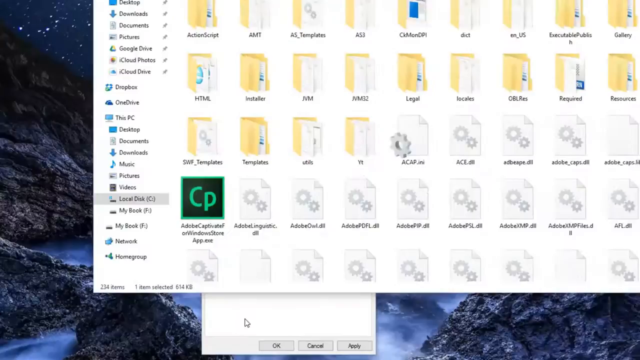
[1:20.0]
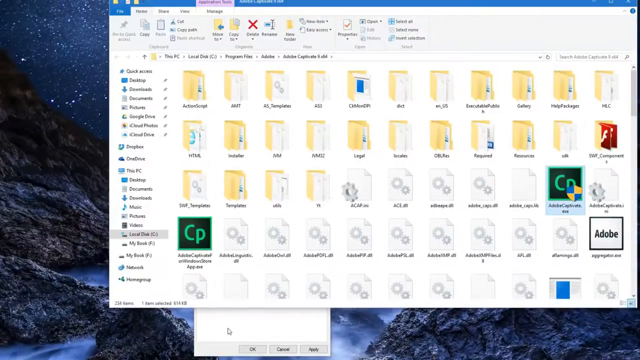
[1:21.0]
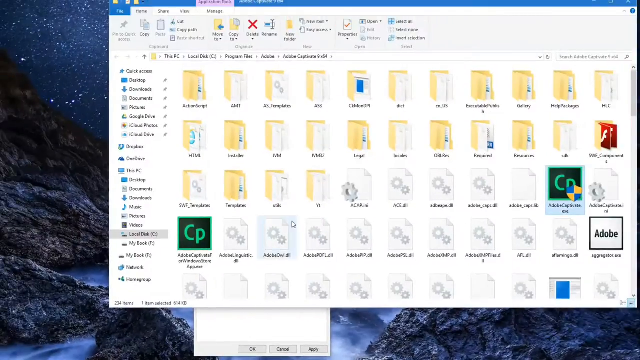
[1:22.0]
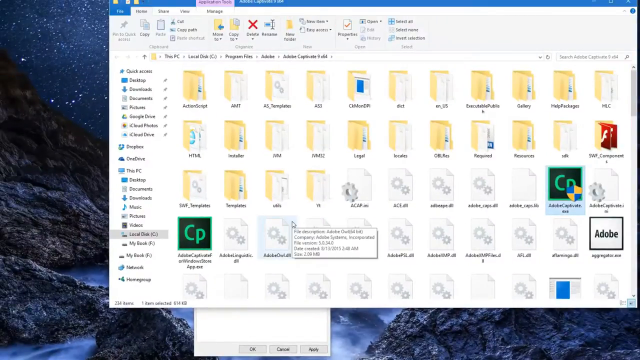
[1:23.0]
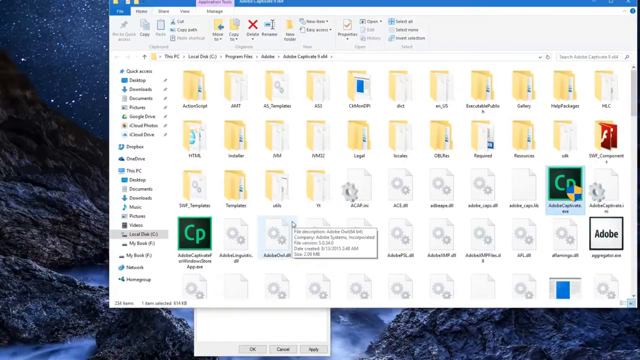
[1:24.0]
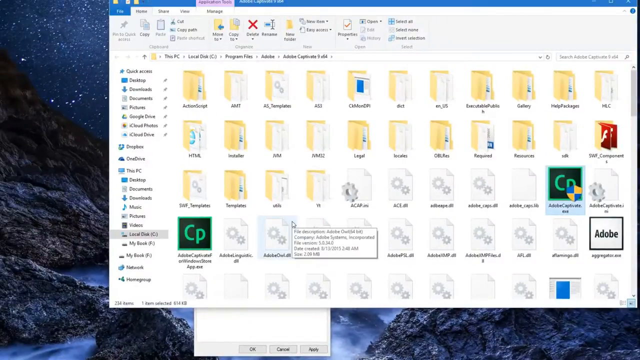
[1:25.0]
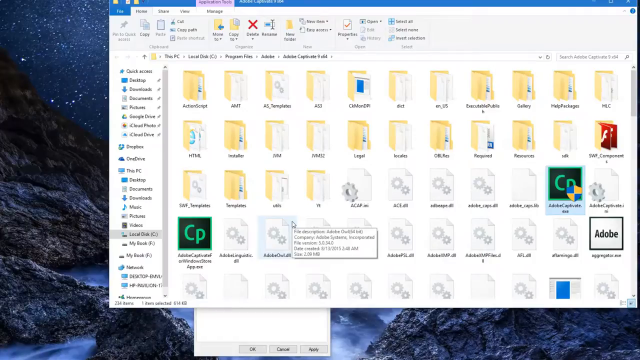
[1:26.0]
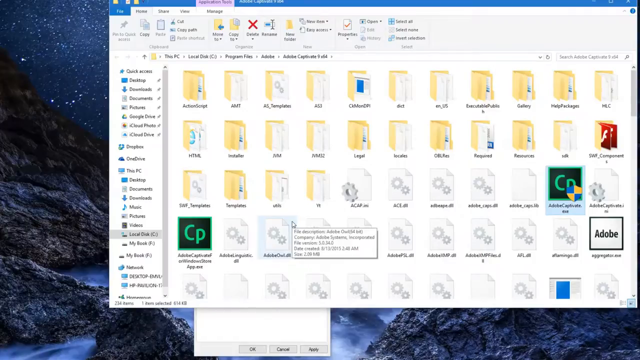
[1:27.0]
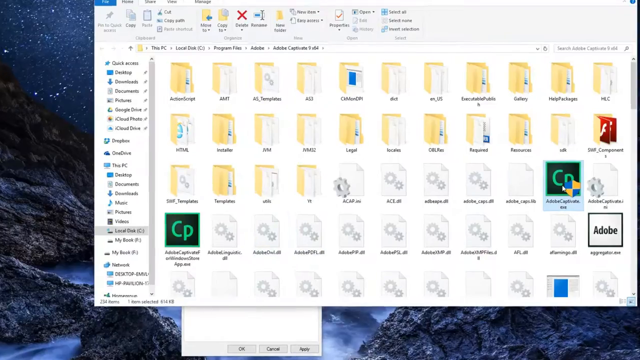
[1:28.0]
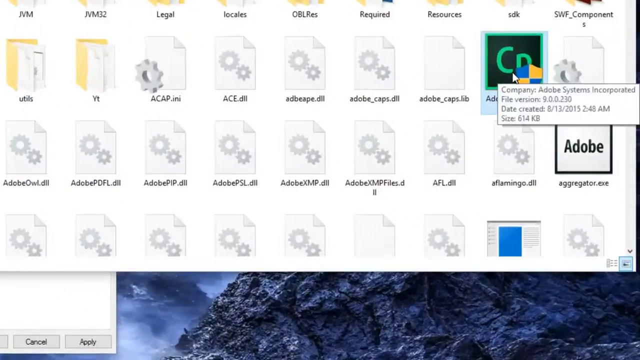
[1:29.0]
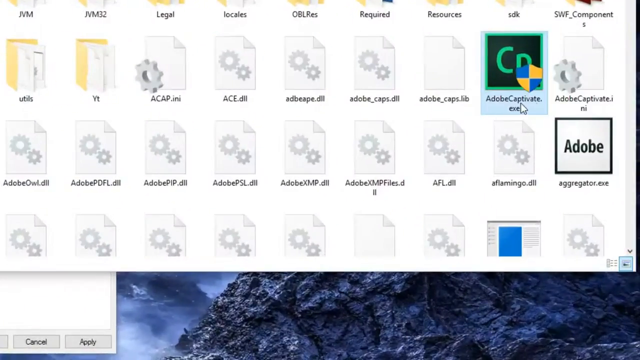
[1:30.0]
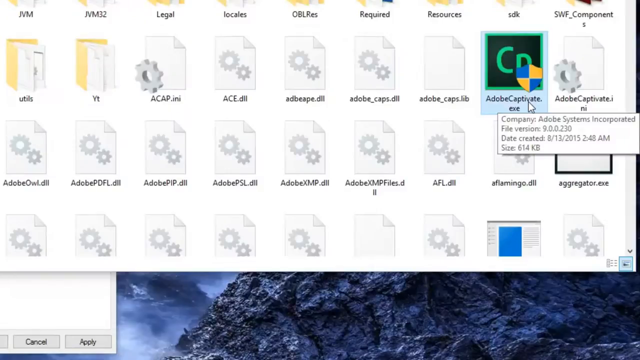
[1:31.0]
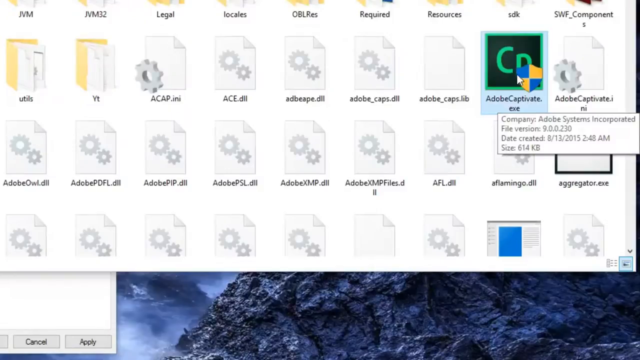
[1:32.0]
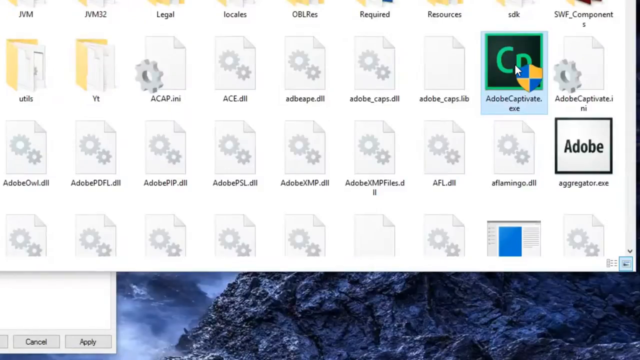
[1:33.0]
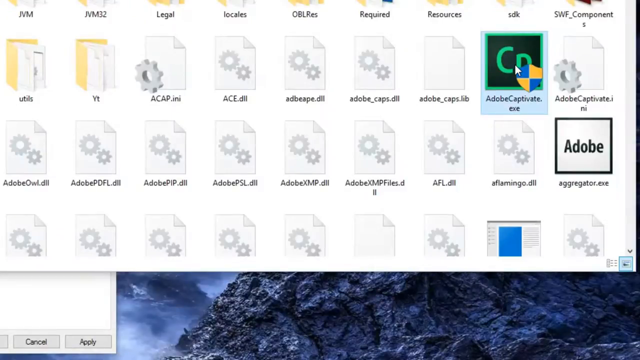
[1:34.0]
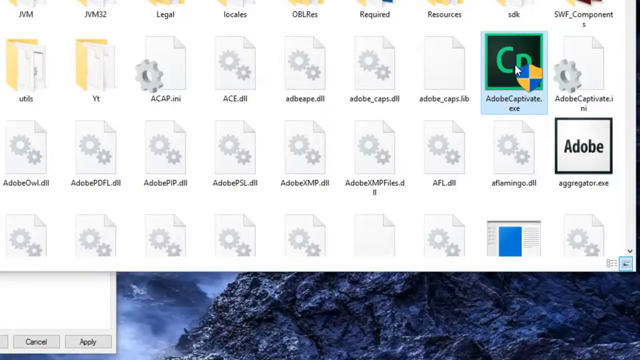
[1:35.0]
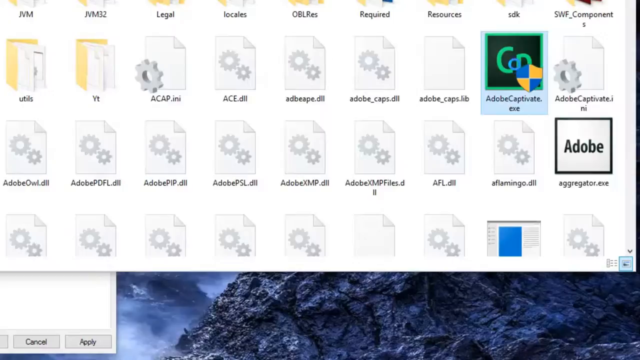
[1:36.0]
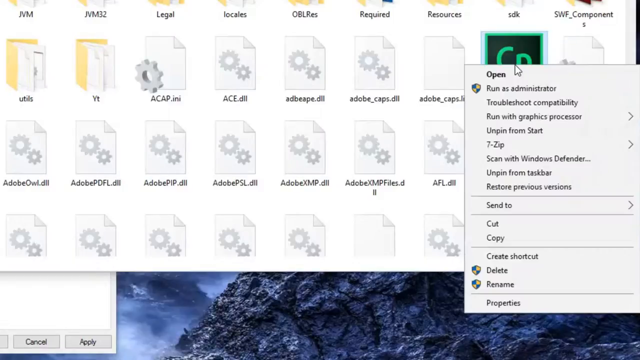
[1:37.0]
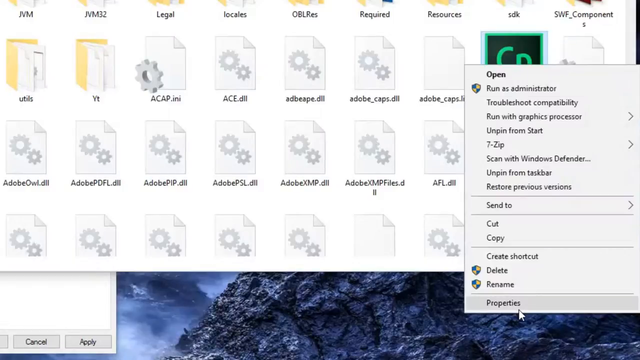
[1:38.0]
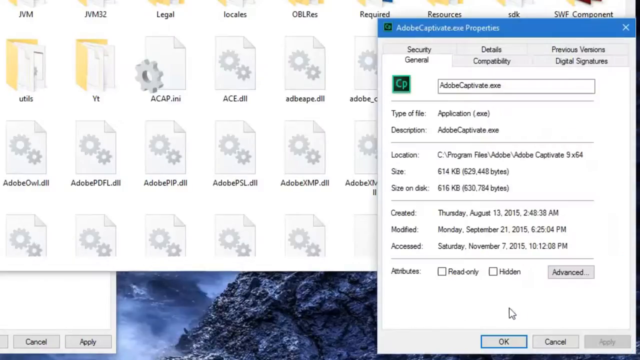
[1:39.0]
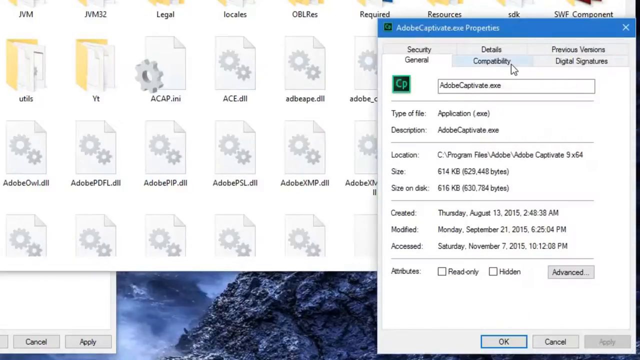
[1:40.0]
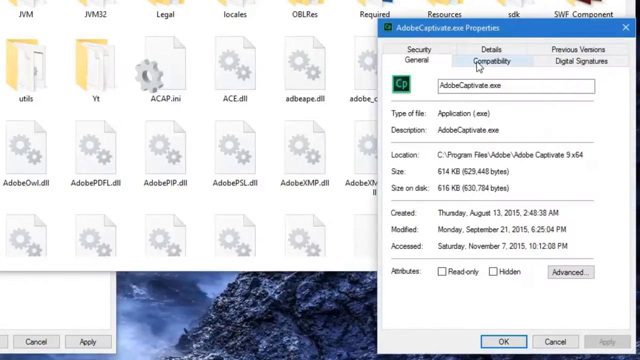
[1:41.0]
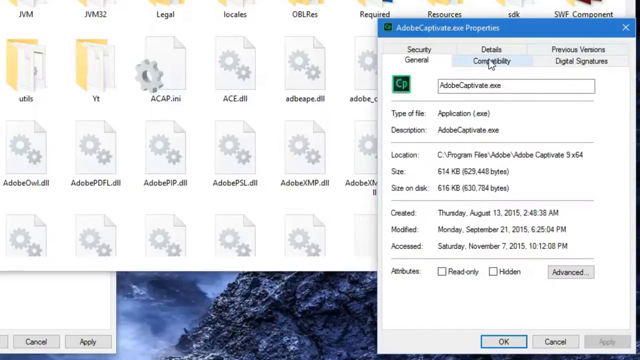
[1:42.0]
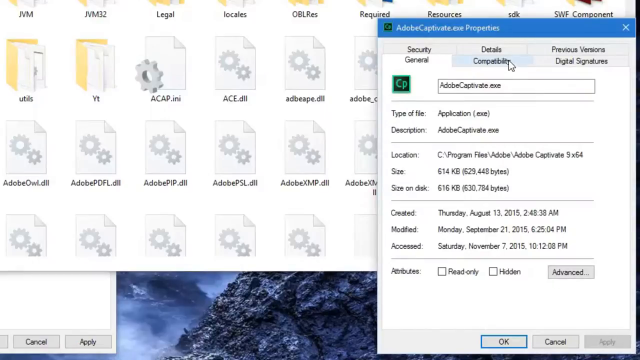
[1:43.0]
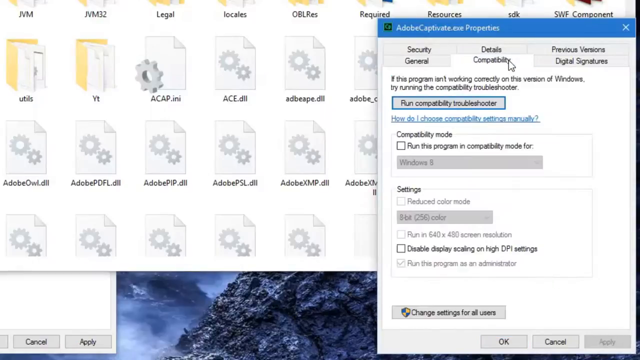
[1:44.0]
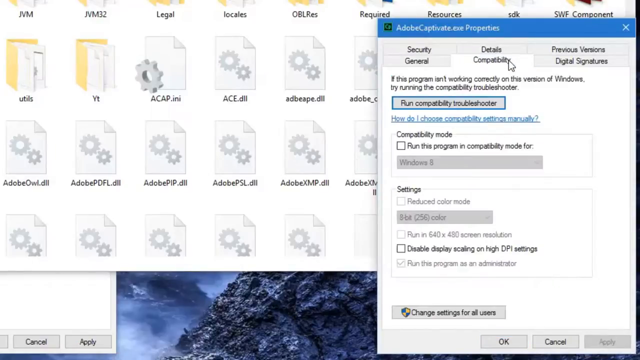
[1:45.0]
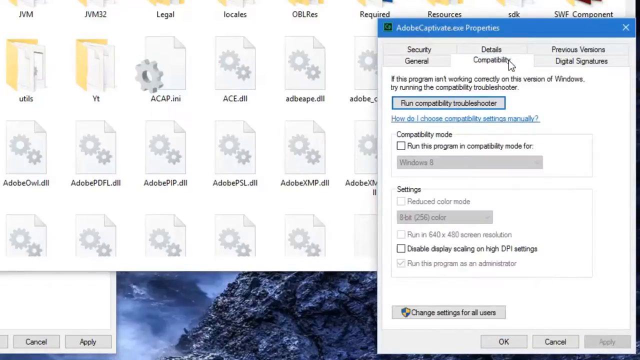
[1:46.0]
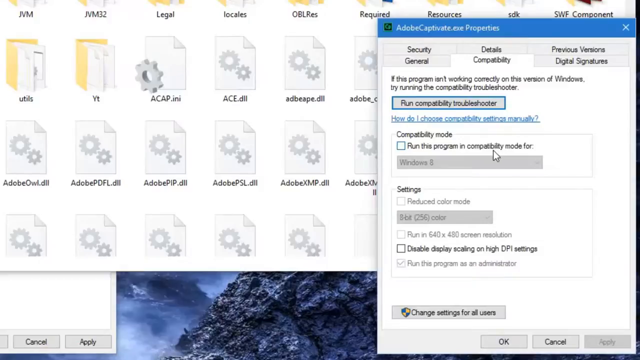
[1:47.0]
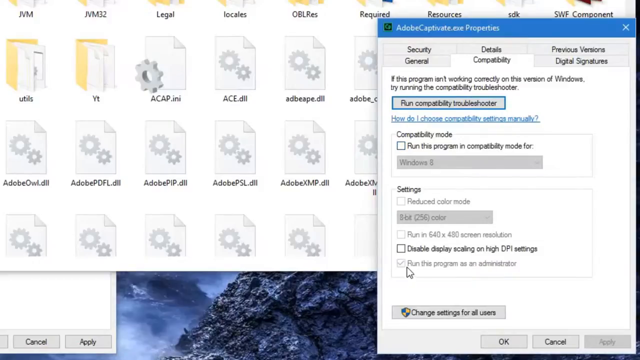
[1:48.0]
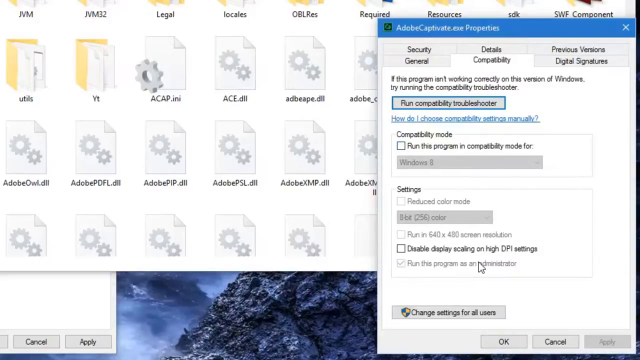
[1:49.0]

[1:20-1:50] Many files and folders appear on the screen, with a range of options to choose from for picking a file in one folder or another. The files are chosen in the folders, apparently to turn on some type of security clearance, and options are chosen to open them.